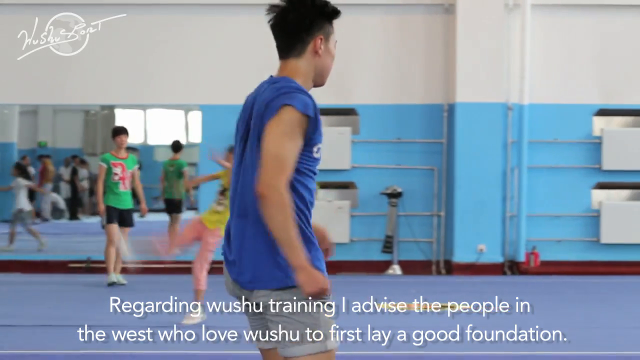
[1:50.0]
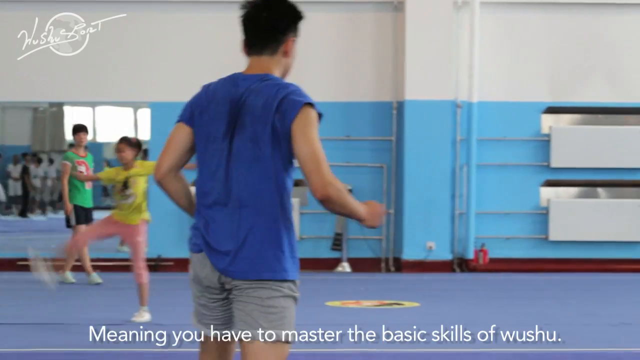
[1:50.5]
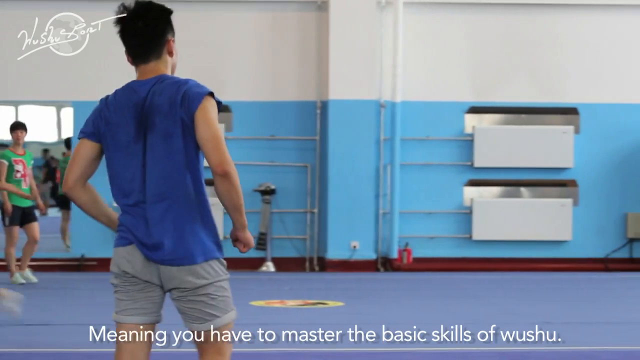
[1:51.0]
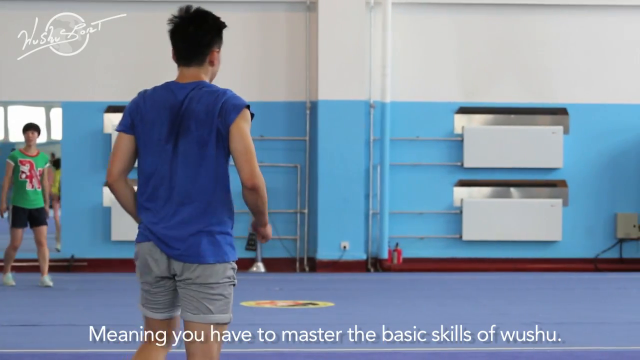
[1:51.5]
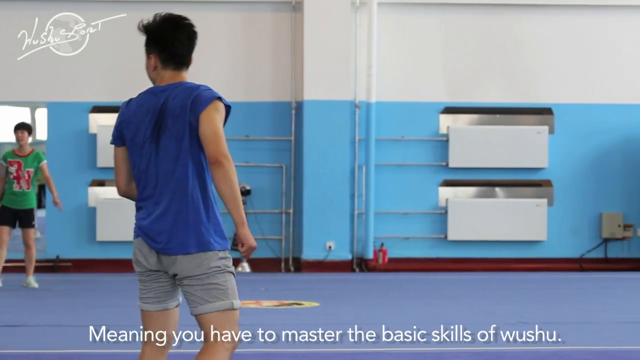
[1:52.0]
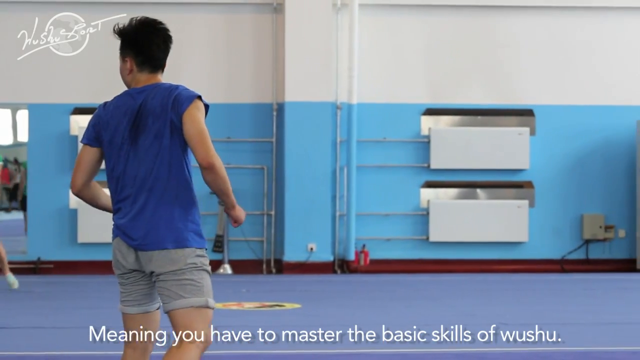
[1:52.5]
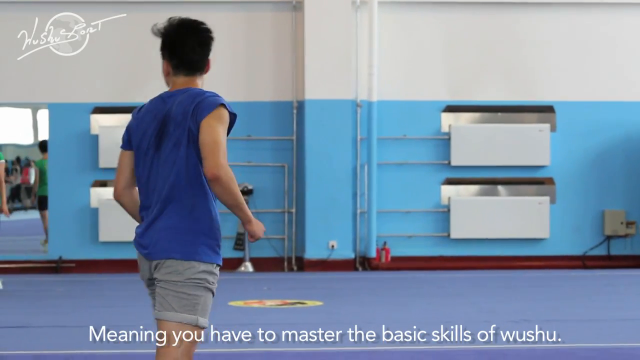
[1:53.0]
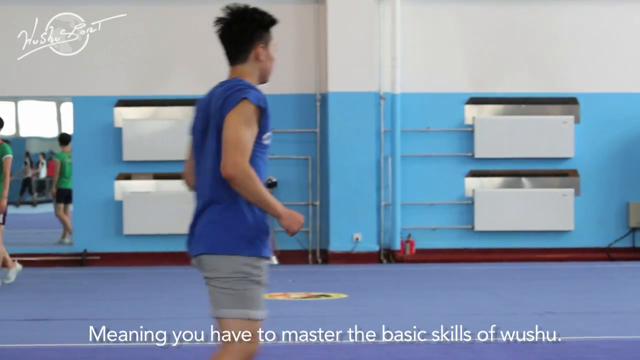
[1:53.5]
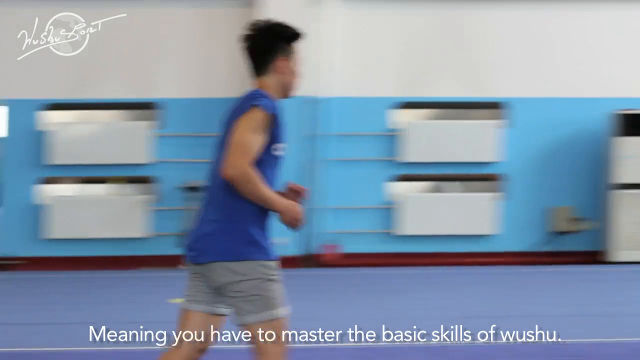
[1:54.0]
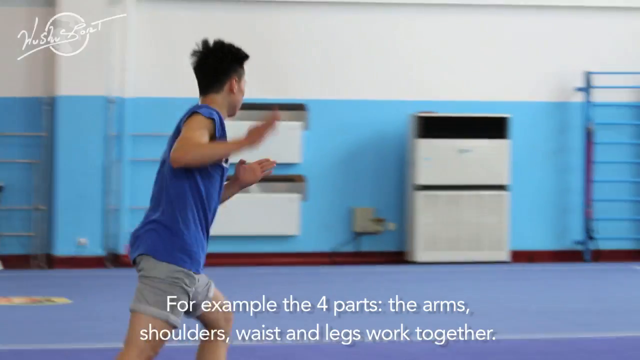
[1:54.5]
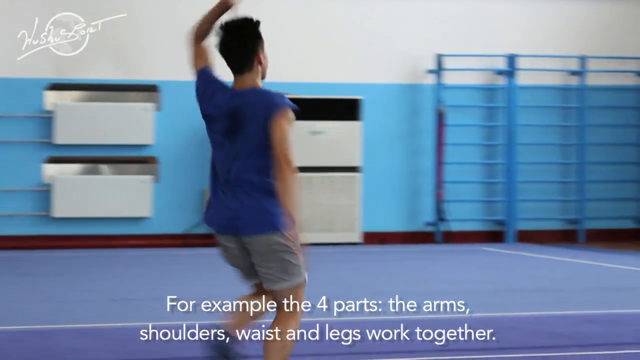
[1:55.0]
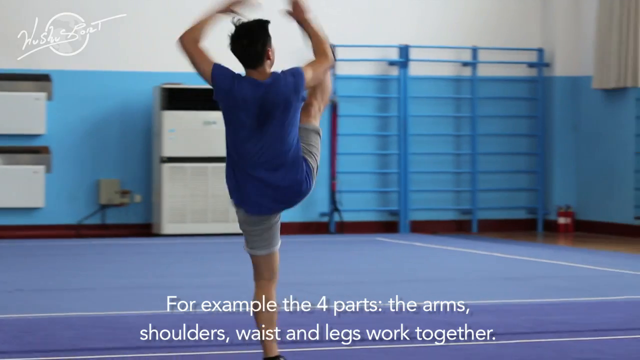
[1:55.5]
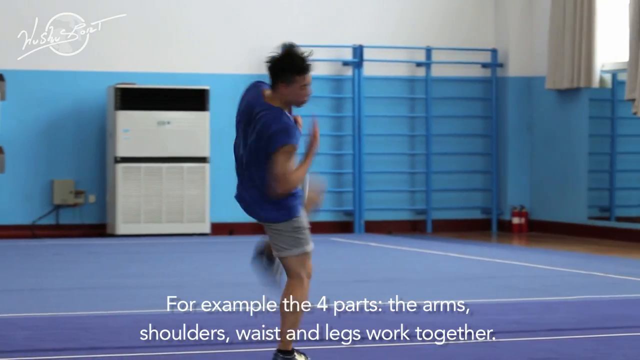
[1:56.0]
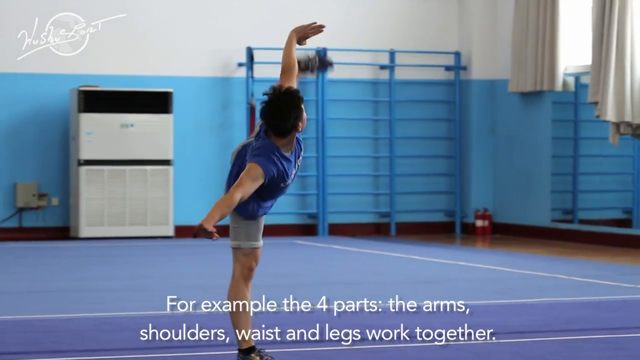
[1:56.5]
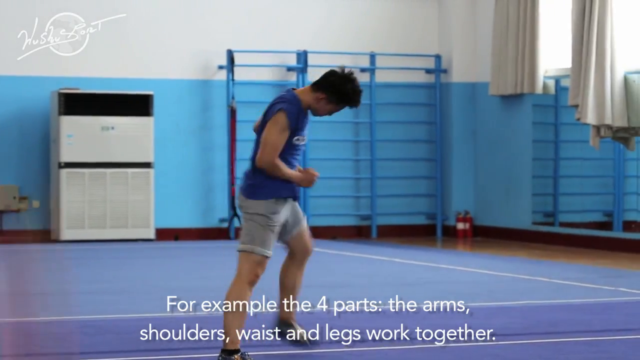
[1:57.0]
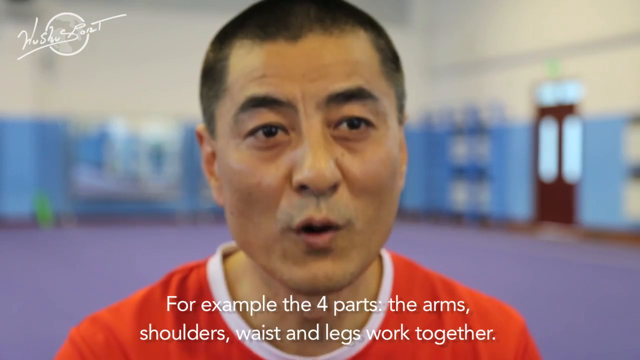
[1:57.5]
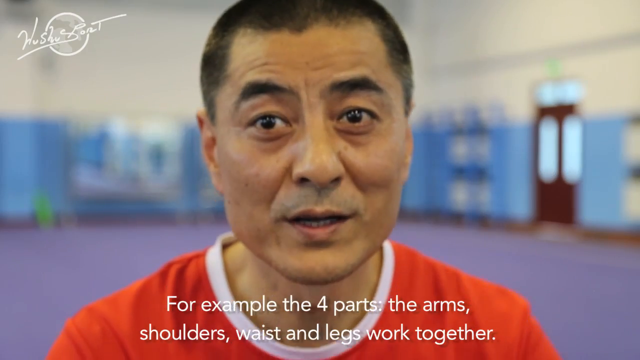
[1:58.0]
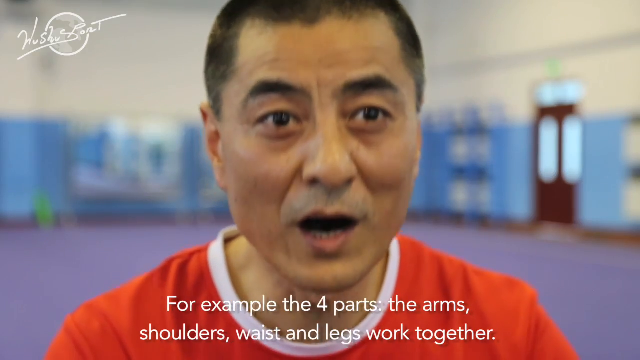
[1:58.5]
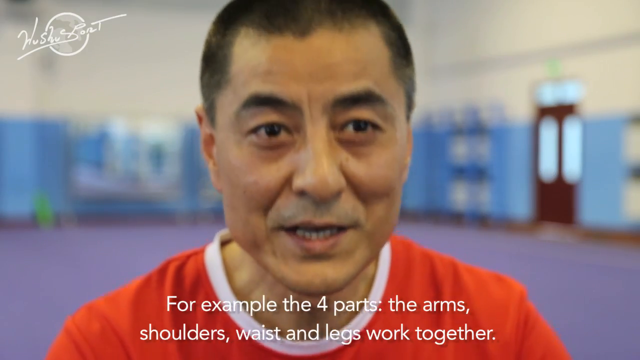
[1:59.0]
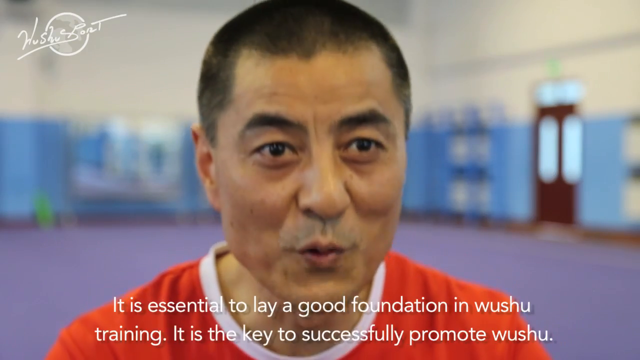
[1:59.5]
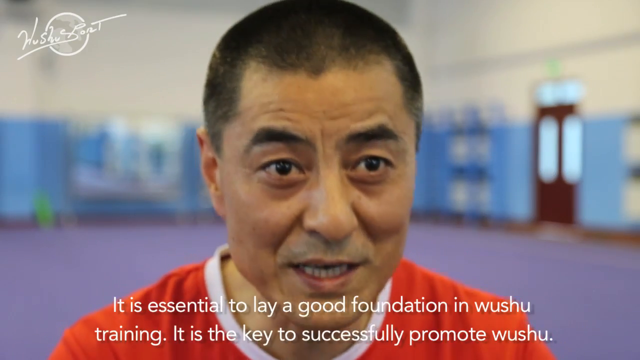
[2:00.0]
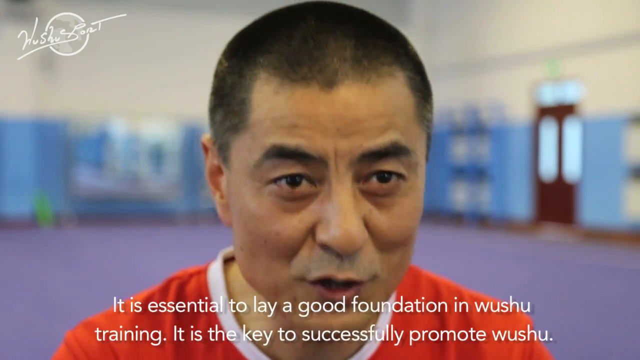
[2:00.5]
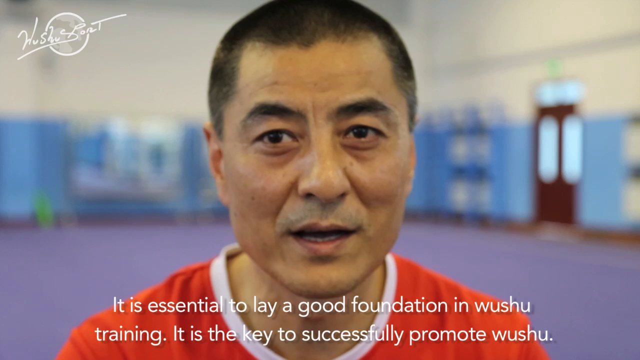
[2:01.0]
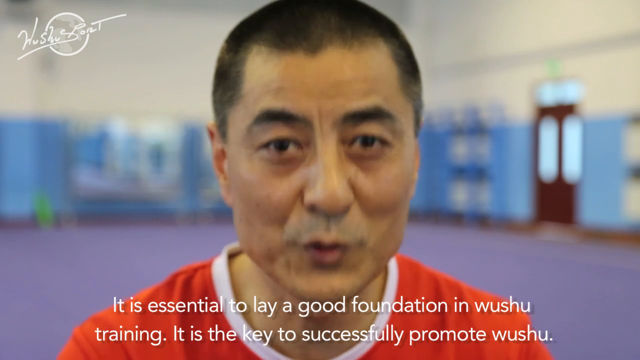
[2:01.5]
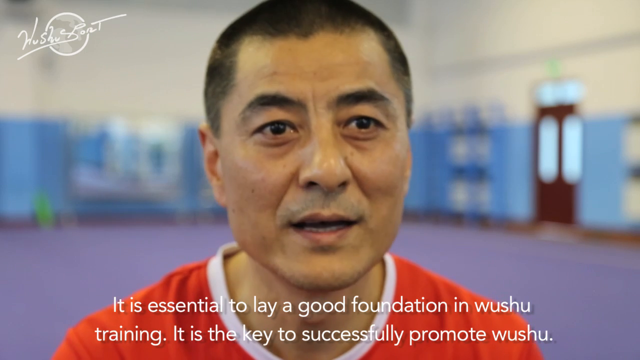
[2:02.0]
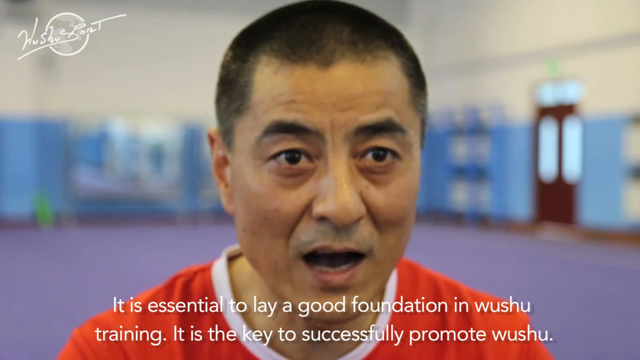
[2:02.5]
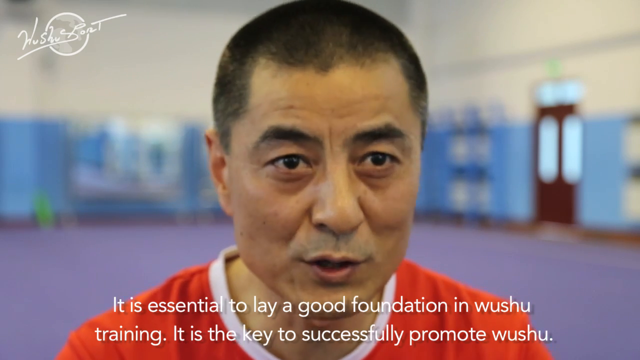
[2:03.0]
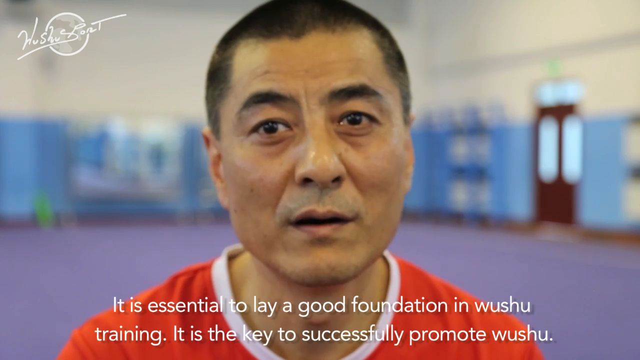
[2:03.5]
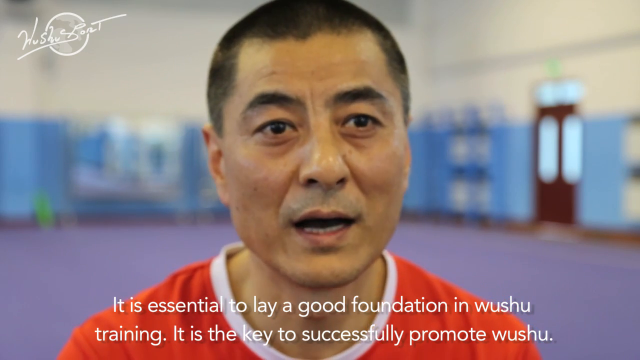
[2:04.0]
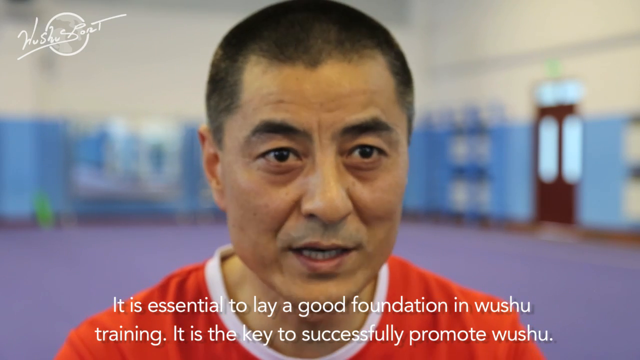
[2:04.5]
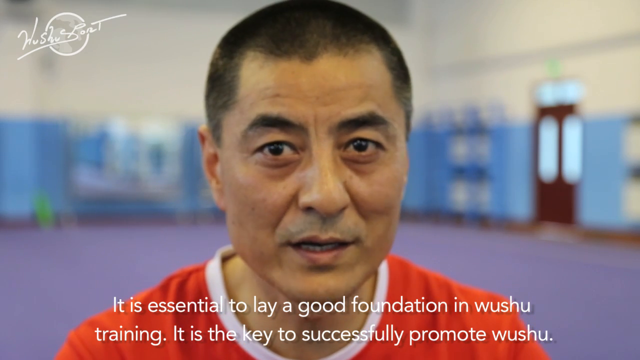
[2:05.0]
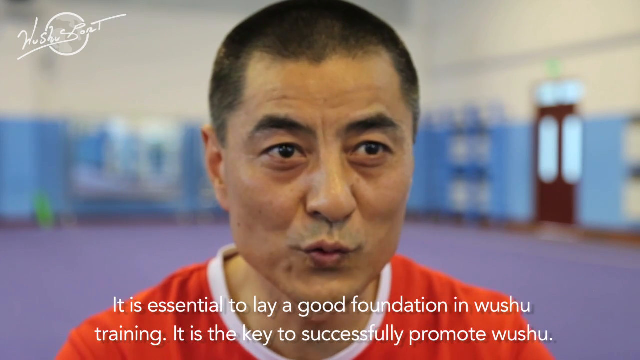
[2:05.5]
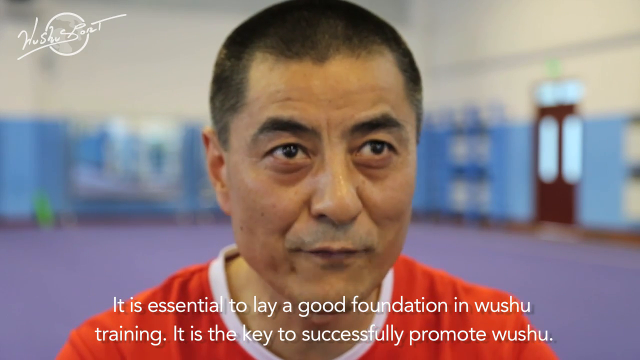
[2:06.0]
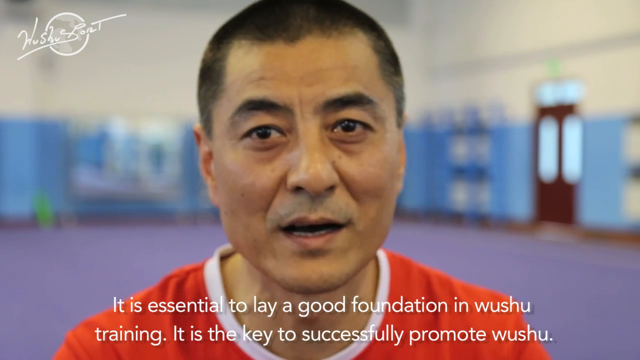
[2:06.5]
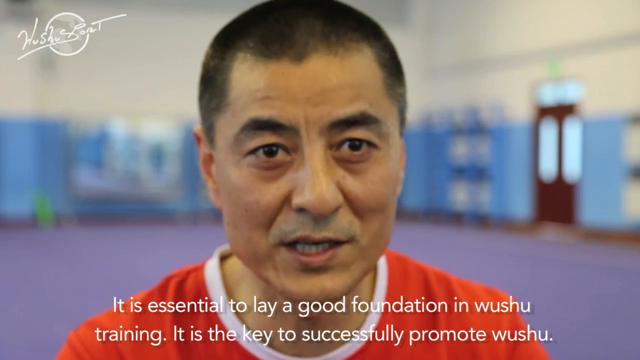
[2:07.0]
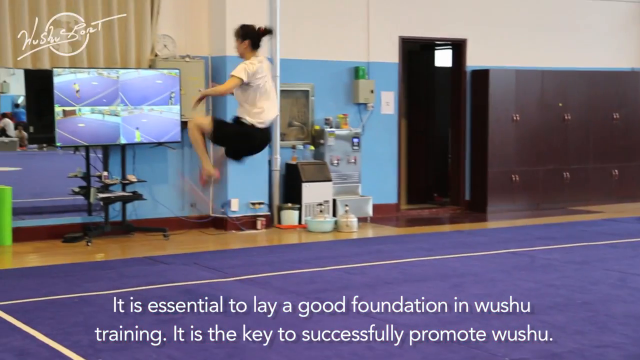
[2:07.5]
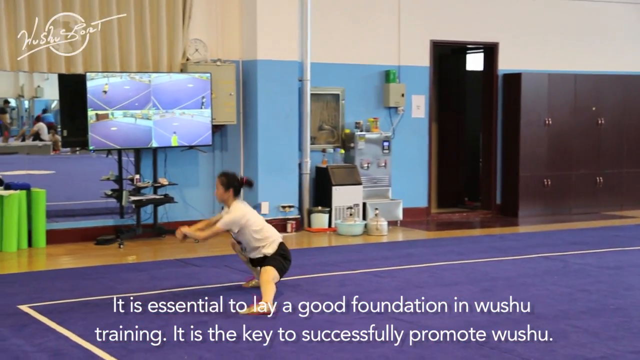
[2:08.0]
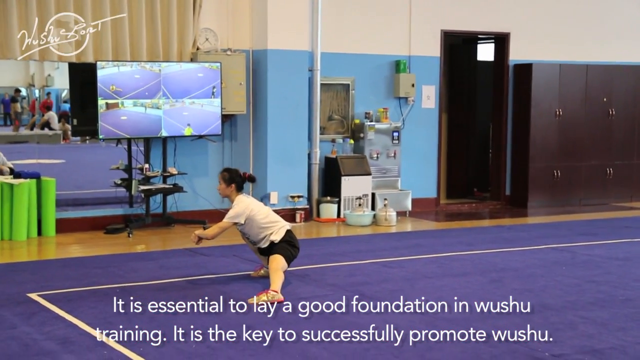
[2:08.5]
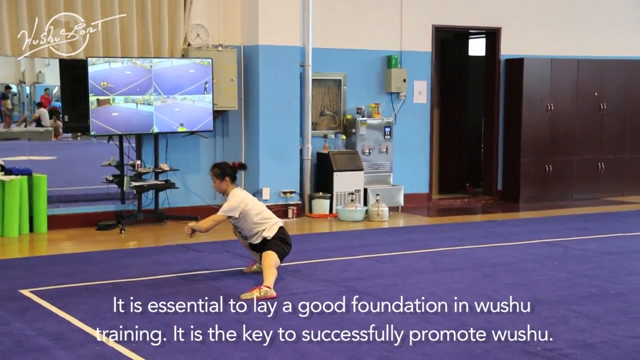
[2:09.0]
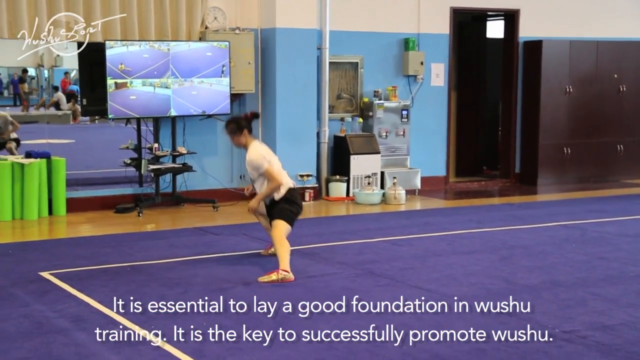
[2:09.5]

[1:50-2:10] In a large room with walls white on the top half and blue on the bottom half and a purple mat floor, a guy with black hair in a short-sleeved blue shirt and gray shorts walks quickly, then sticks his right leg straight up in front of him, grabbing it with his arms, holding it up and stretching it. Captions along the bottom read "for example the four parts the arms shoulders waist and legs work together". The video cuts to a Chinese man with a buzzed head of black hair, wearing a red shirt with a white collar, speaking directly to the camera, with captions below him reading "it is essential to lay a good foundation in wushu training it is the key to successfully promote wushu". Behind him is the room with white-over-blue walls and a big purple mat floor.